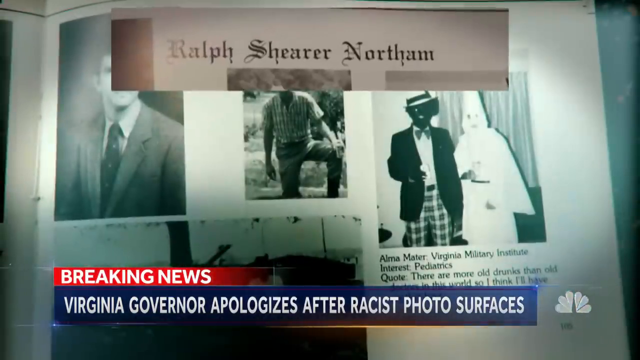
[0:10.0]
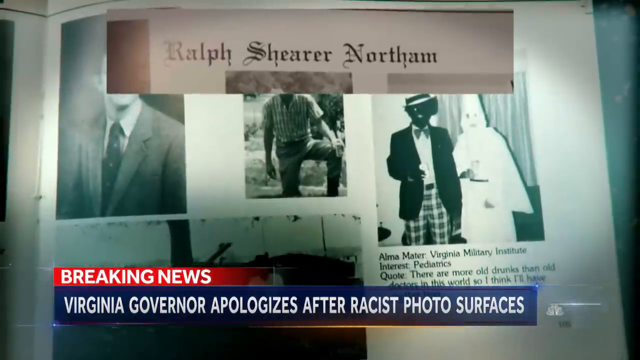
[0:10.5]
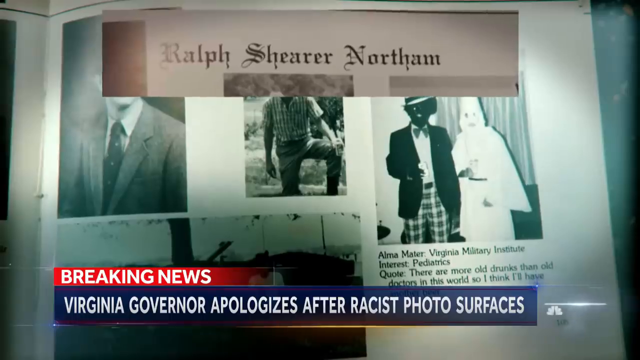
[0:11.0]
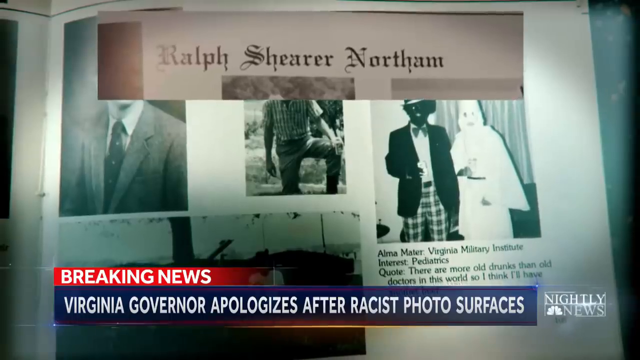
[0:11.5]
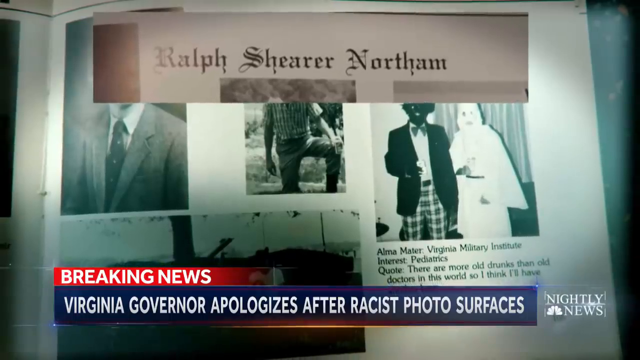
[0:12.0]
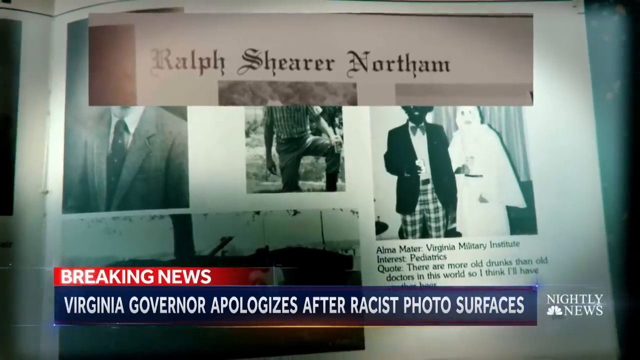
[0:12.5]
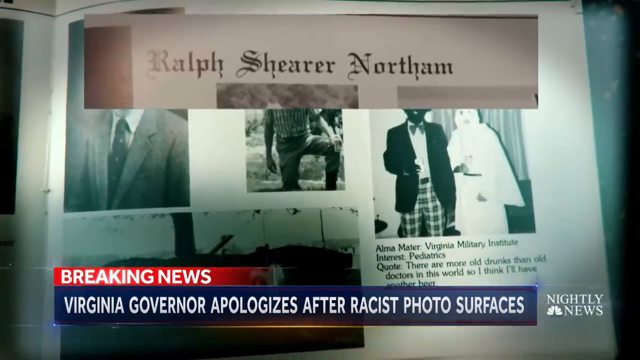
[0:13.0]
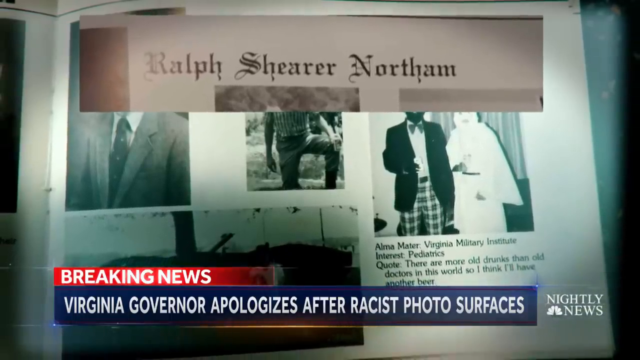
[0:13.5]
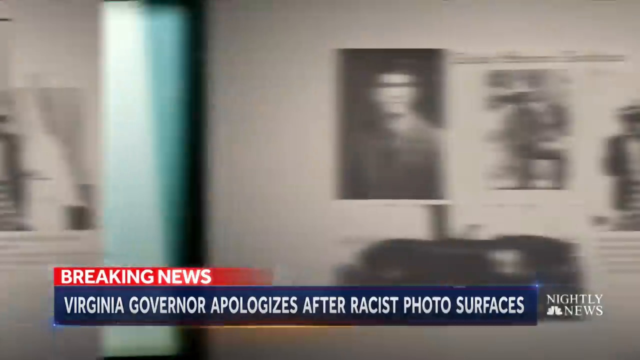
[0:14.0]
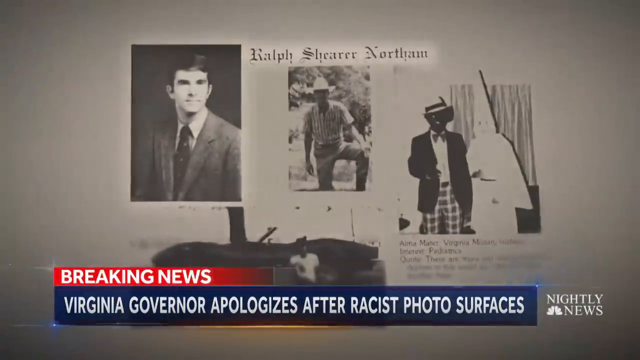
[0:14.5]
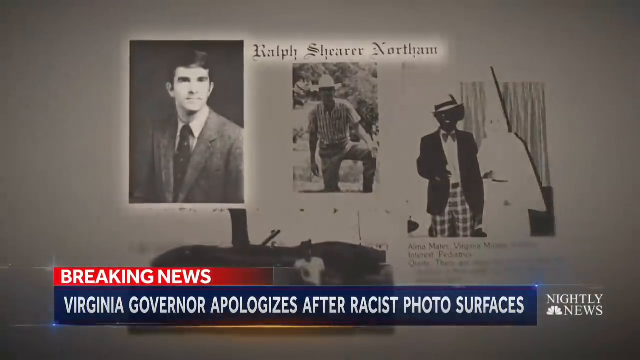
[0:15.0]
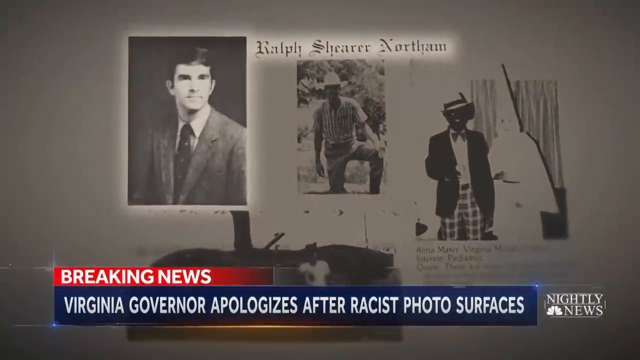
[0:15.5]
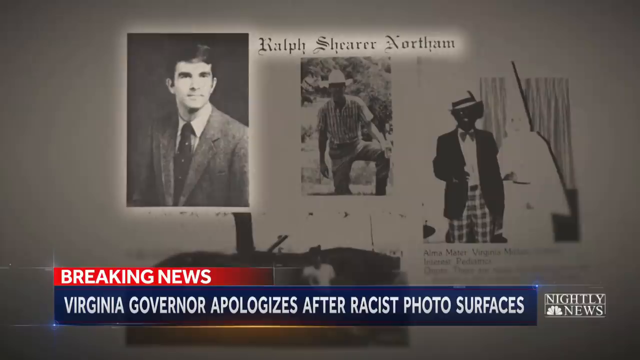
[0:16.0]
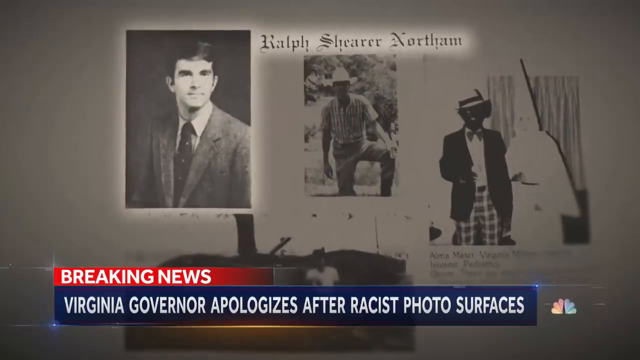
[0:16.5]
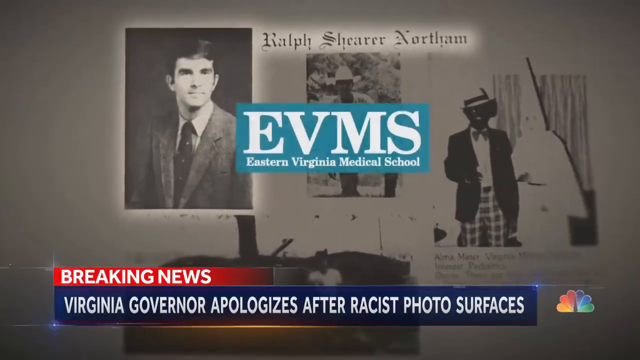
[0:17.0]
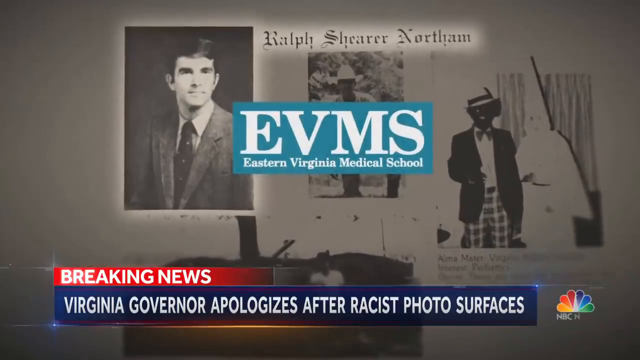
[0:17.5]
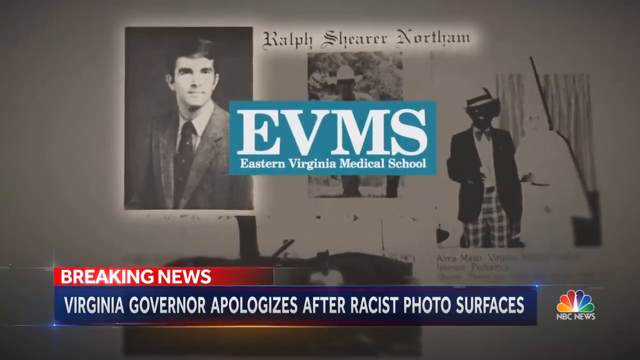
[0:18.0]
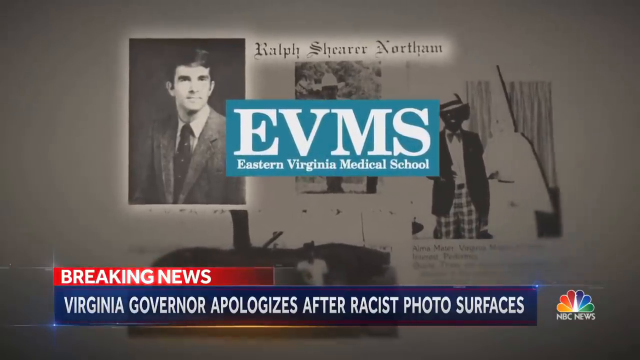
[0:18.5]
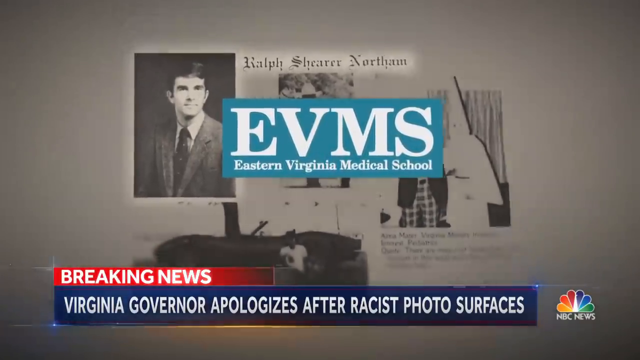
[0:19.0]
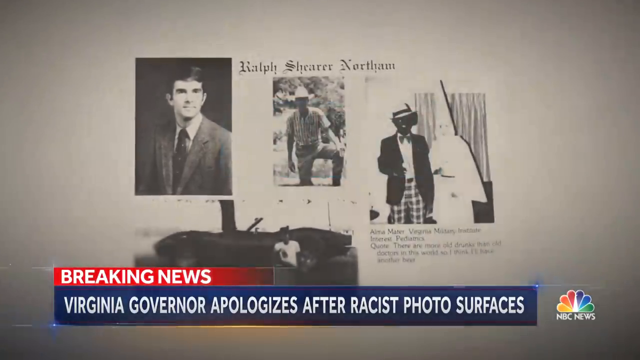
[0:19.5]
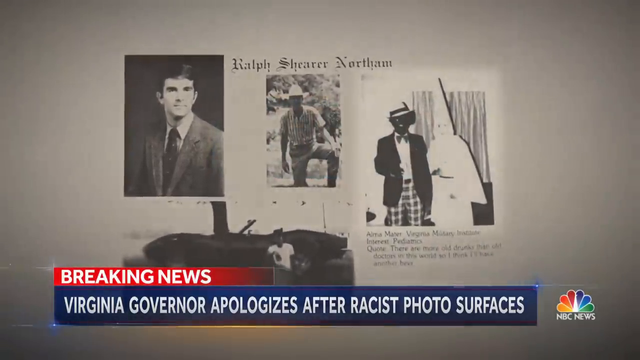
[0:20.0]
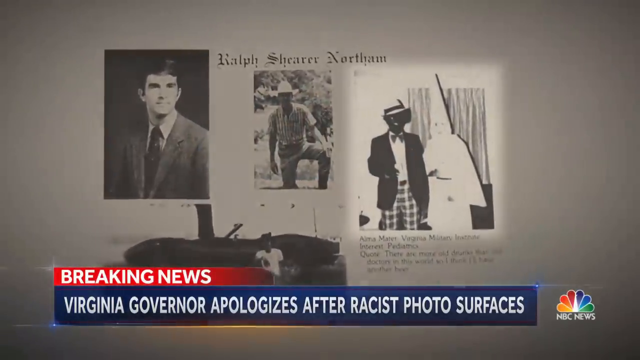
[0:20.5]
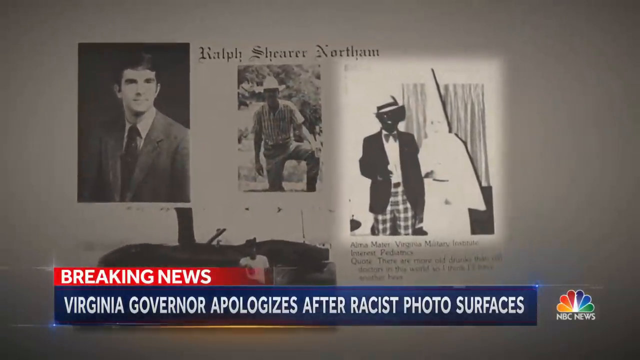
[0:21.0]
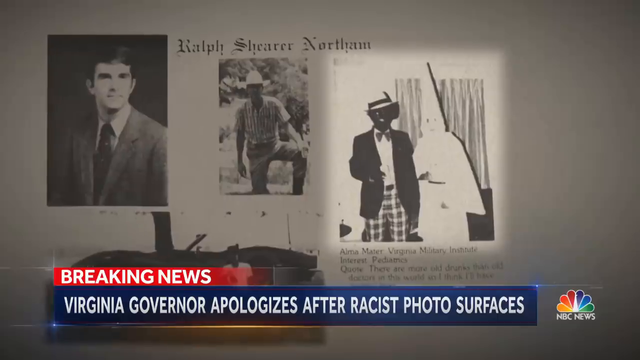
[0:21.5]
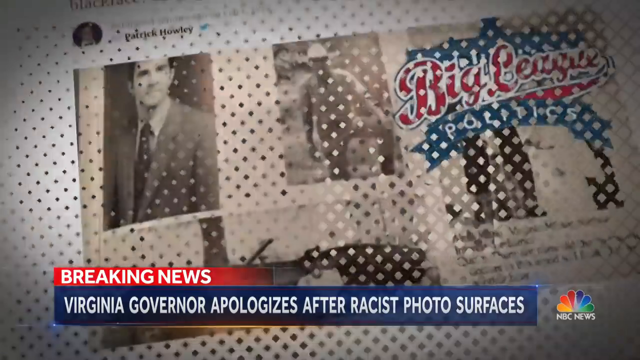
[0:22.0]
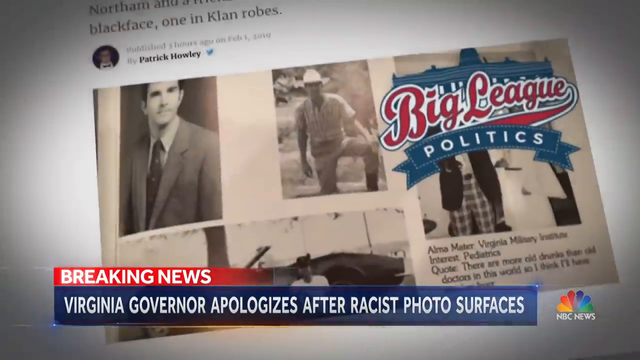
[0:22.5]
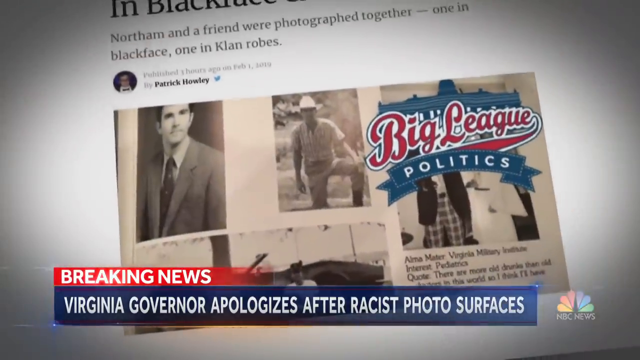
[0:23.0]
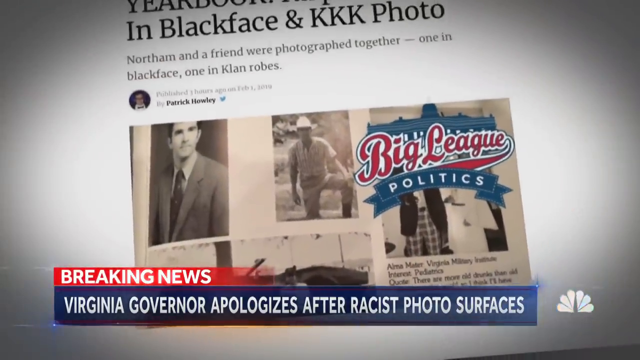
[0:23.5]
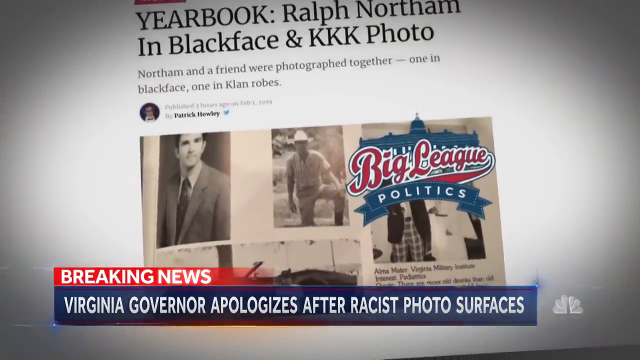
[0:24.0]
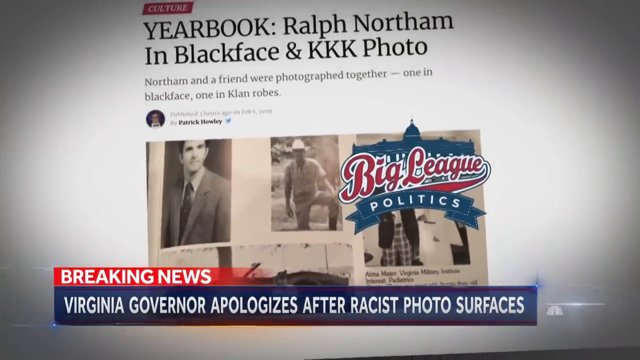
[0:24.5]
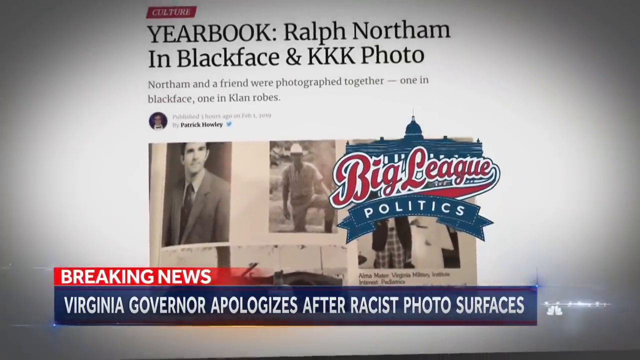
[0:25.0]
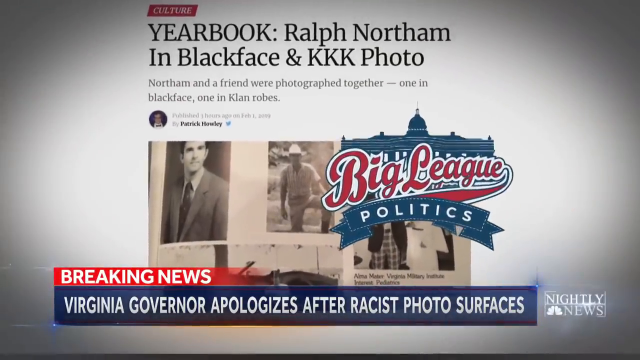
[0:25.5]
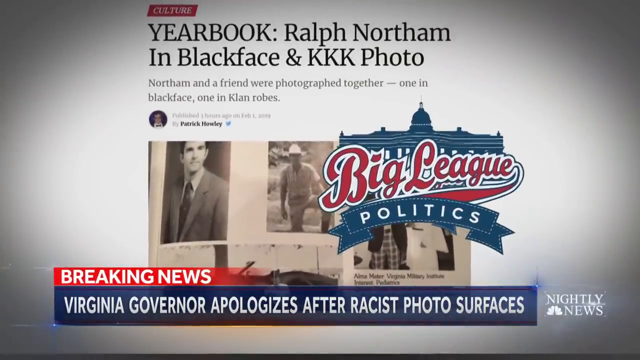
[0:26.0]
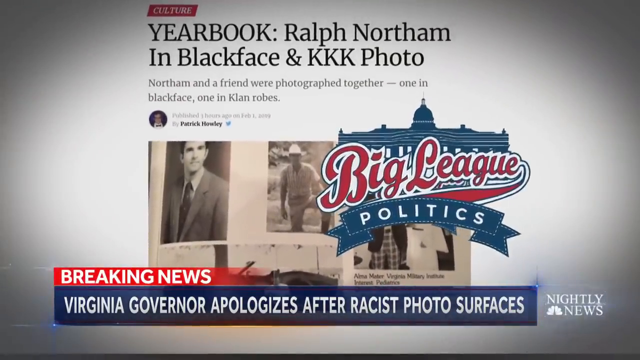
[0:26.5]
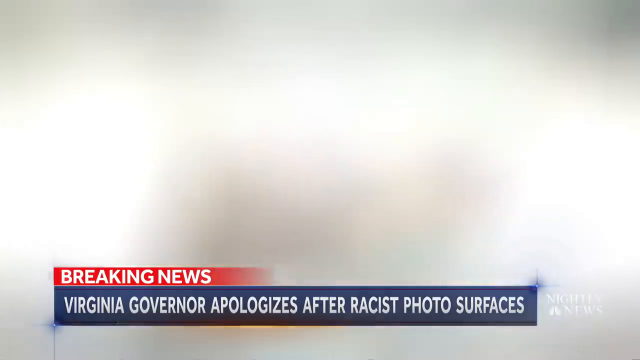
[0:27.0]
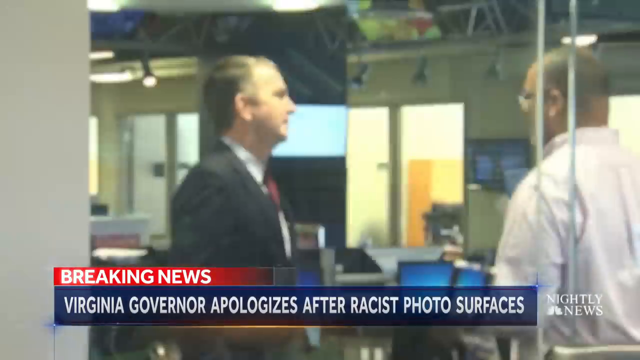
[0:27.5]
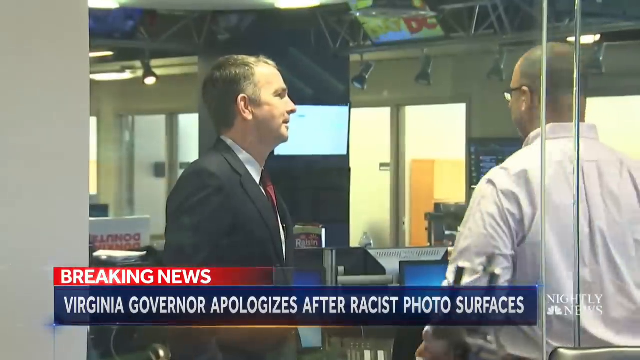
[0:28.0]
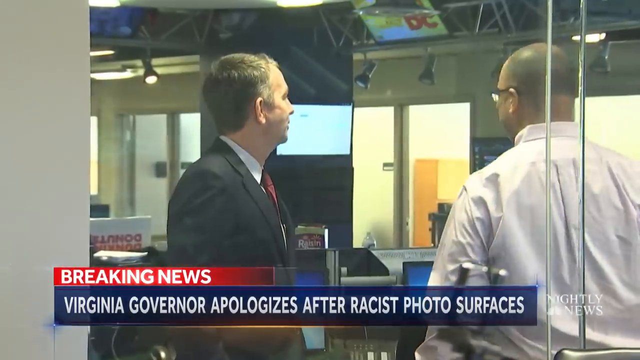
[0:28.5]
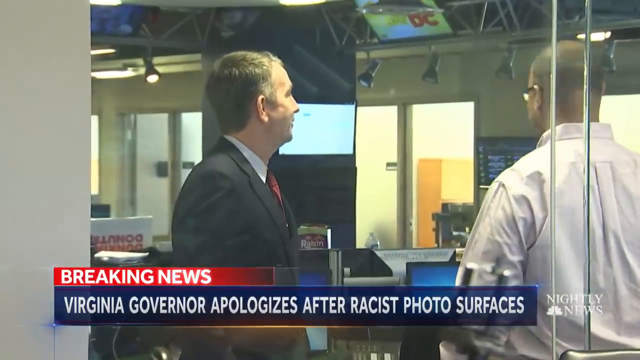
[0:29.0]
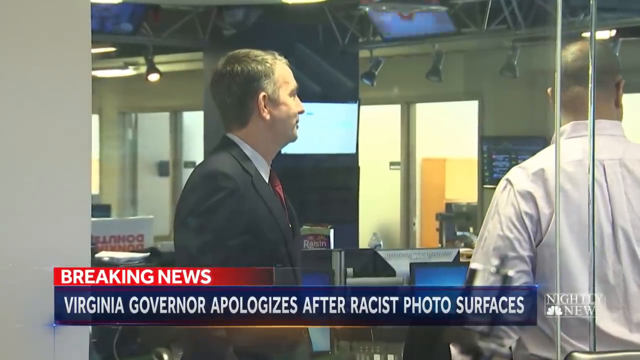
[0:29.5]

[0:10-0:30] The name "Ralph Shearer Northam" is clipped out of the page and the camera zooms in on it, with the yearbook containing the incriminating photograph behind it. The shot cuts to the same yearbook page, where his name and black-and-white profile picture are highlighted for emphasis. An overlay logo appears with the abbreviation of his school, EVMS, the Eastern Virginia Medical School. The racist photograph is then highlighted: a person in blackface standing next to another person dressed as a Grand Wizard of the KKK, or a KKK member. Another article follows, the one that uncovered the controversy, by Patrick Howley, titled "yearbook, Ralph Northam in blackface and KKK photo" and reading "Northam and a friend were photographed together, one in blackface, one in Klan robes." A screenshot of the yearbook page with the photographs is shown.